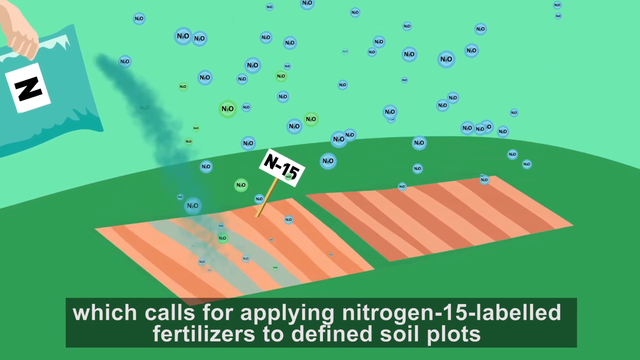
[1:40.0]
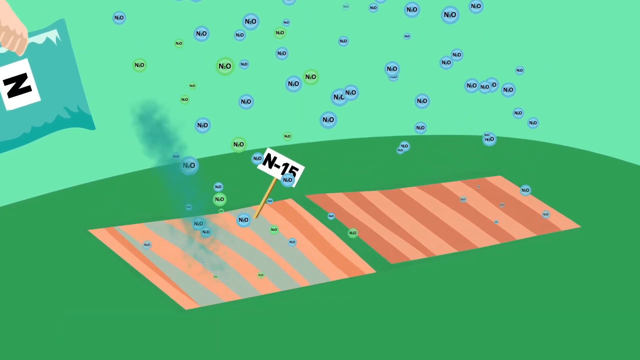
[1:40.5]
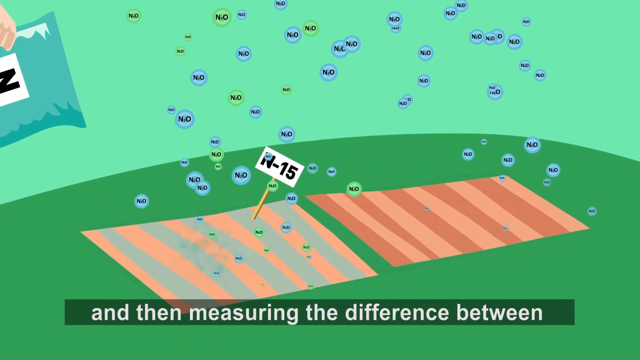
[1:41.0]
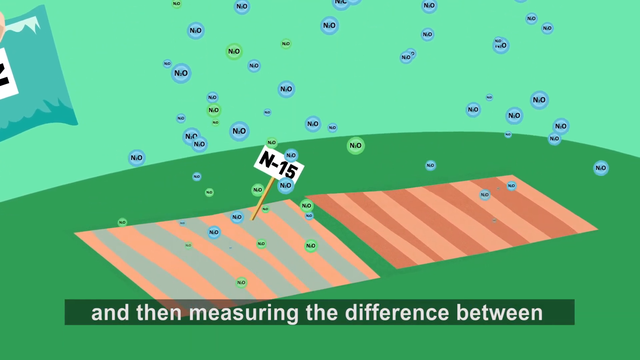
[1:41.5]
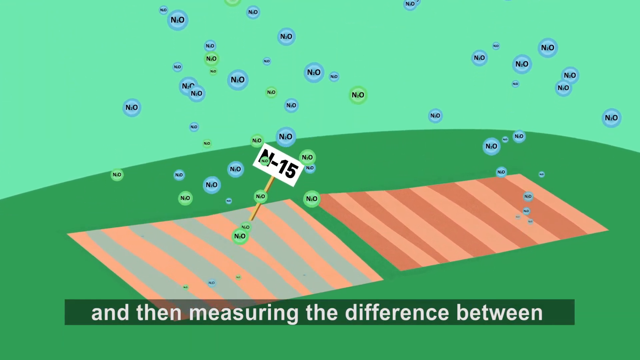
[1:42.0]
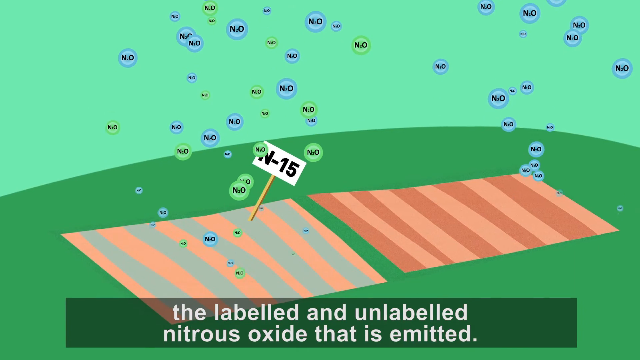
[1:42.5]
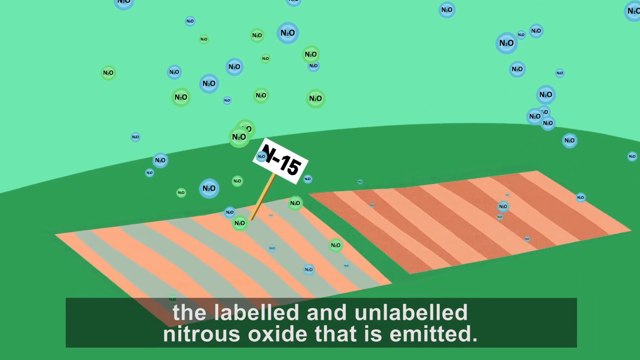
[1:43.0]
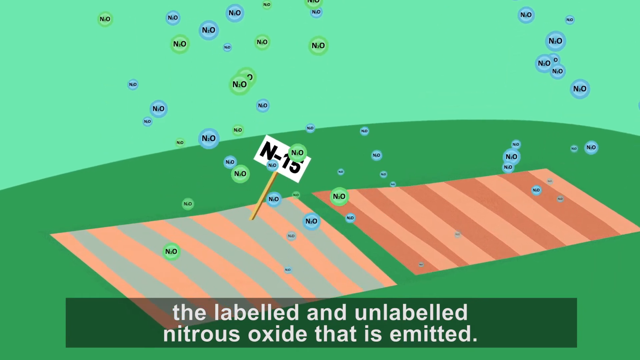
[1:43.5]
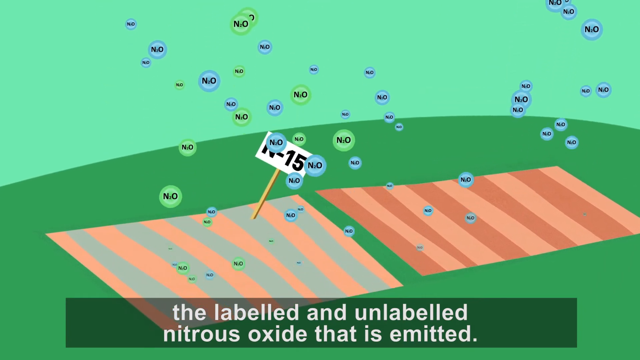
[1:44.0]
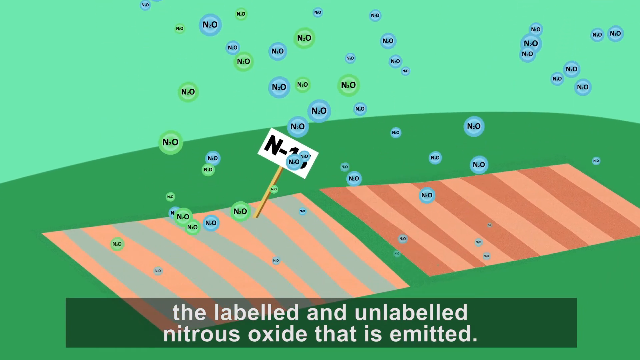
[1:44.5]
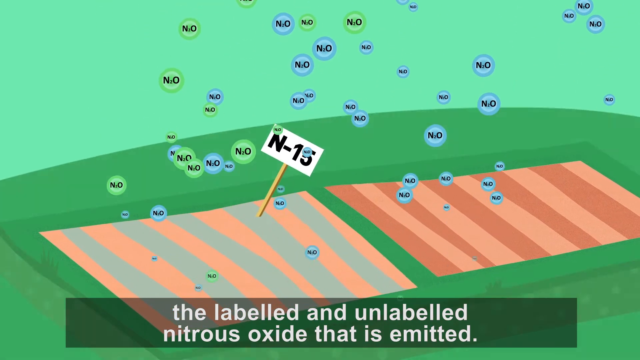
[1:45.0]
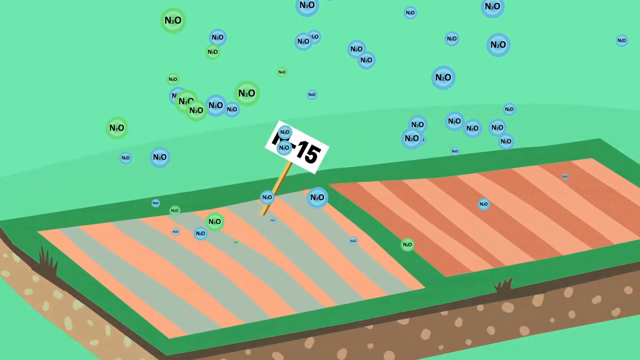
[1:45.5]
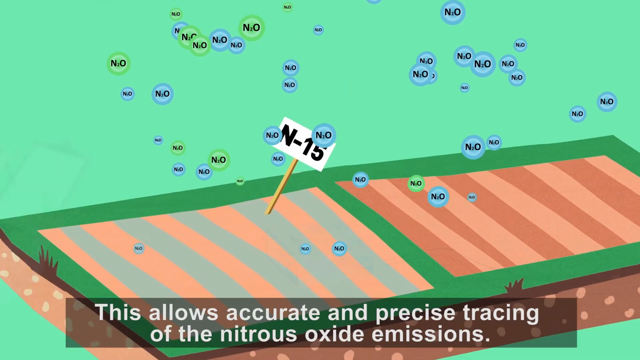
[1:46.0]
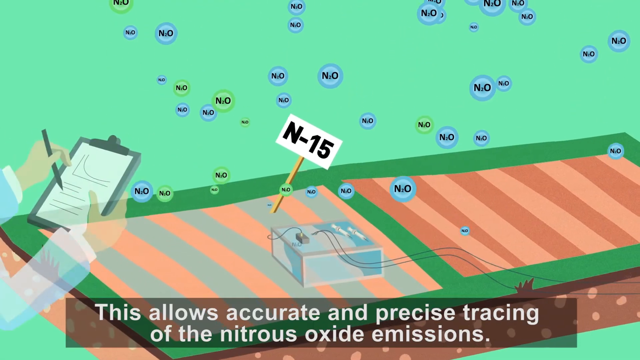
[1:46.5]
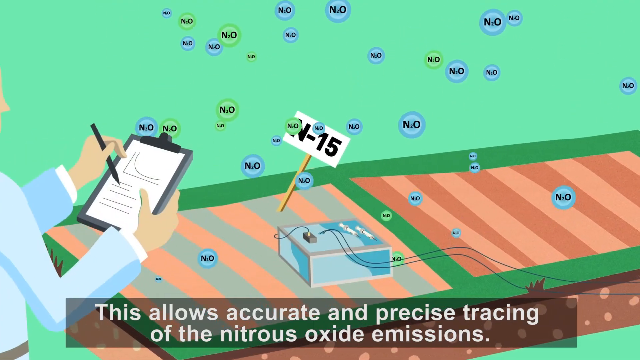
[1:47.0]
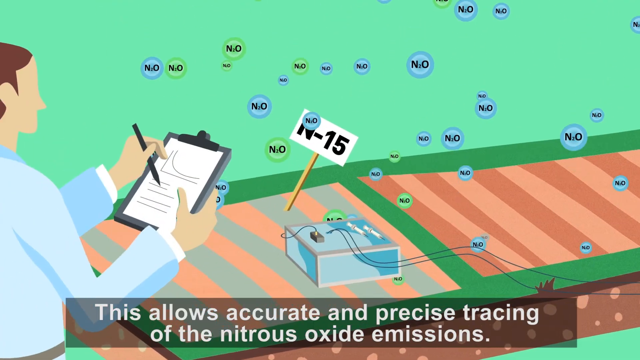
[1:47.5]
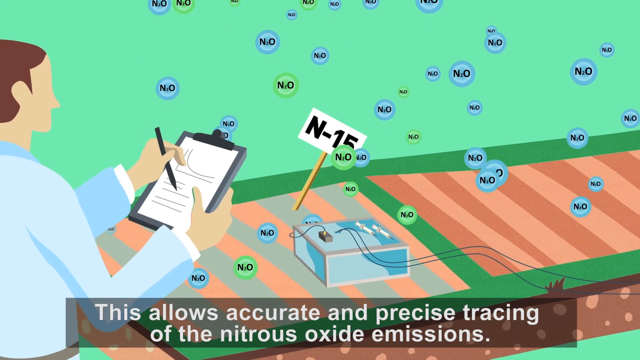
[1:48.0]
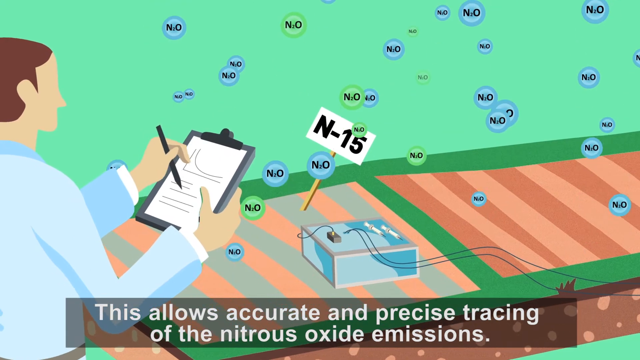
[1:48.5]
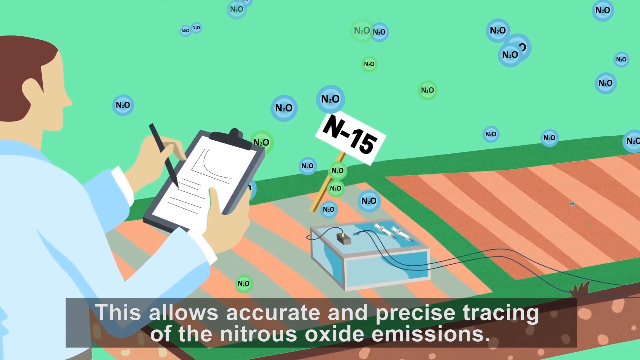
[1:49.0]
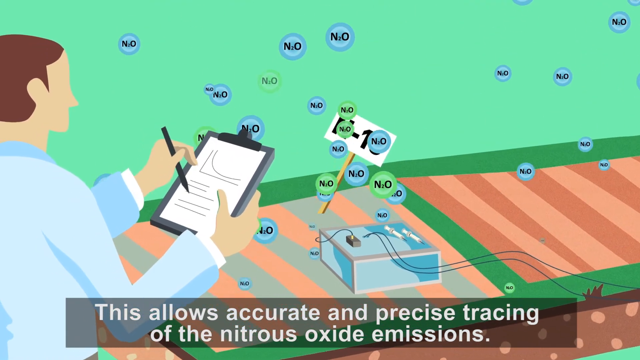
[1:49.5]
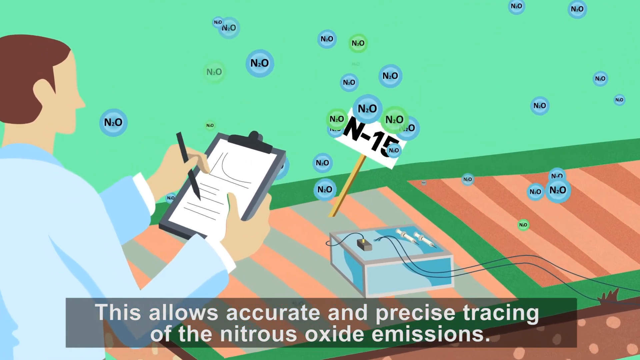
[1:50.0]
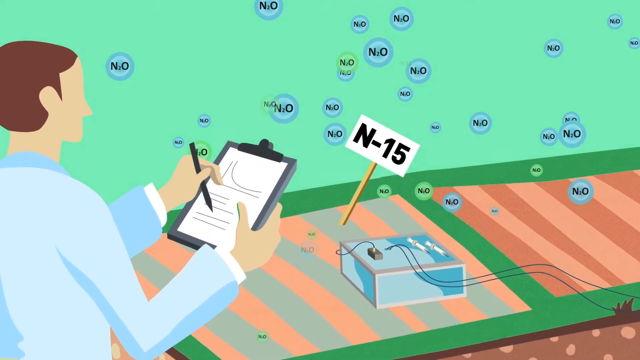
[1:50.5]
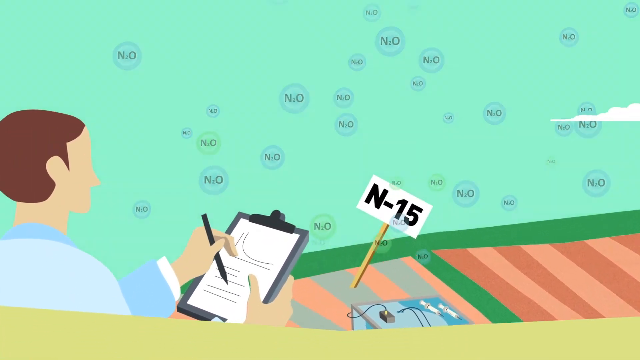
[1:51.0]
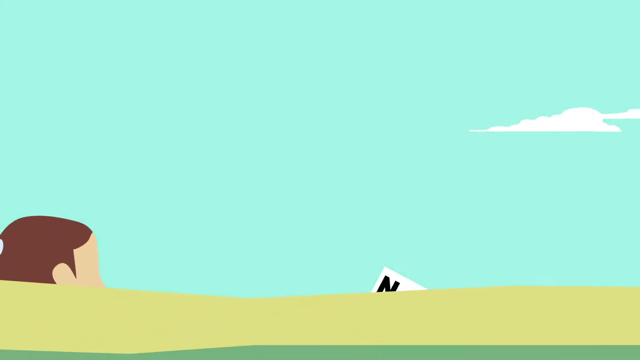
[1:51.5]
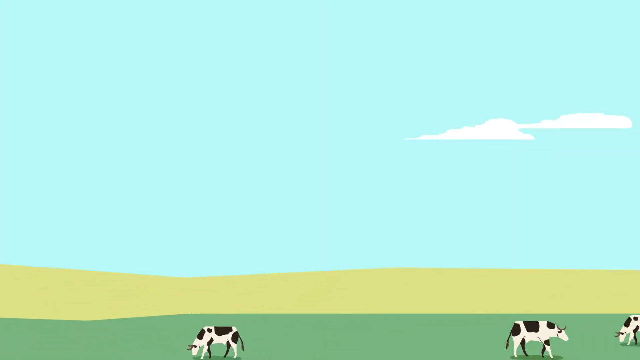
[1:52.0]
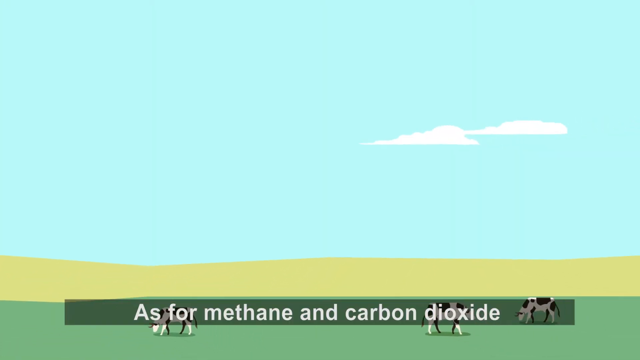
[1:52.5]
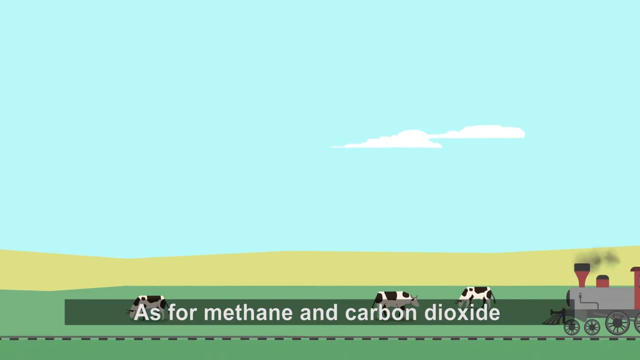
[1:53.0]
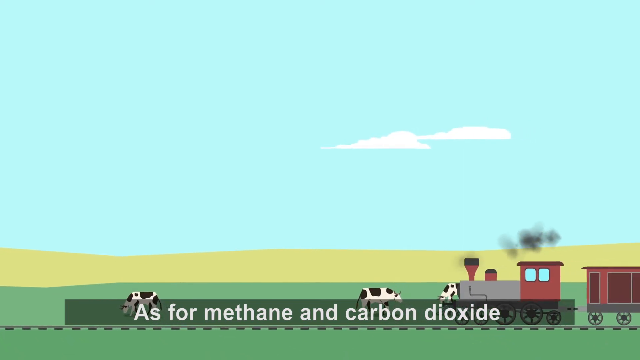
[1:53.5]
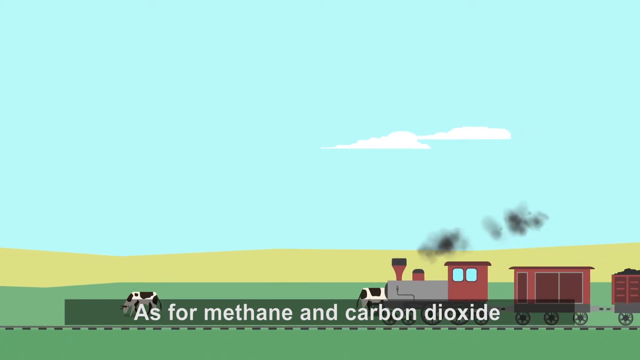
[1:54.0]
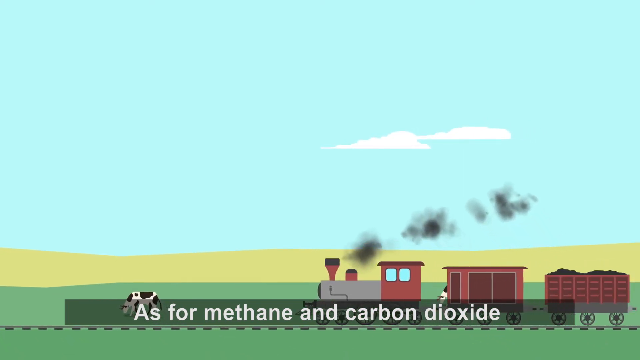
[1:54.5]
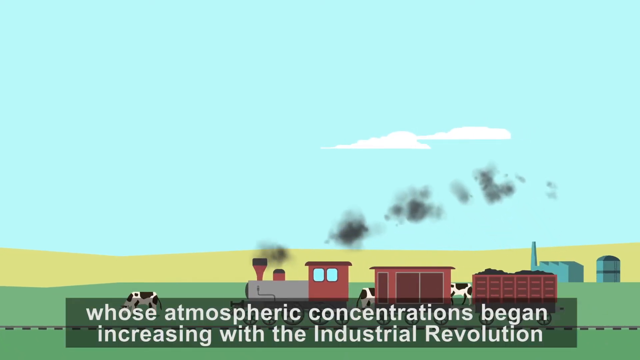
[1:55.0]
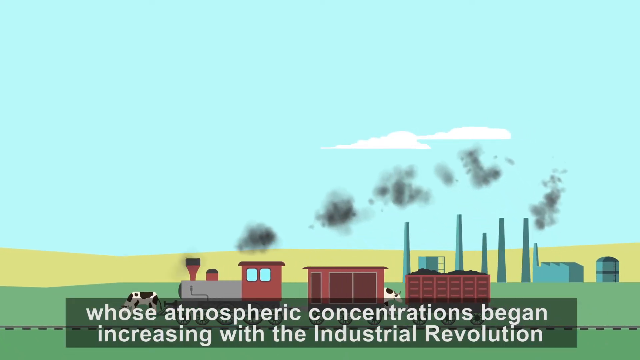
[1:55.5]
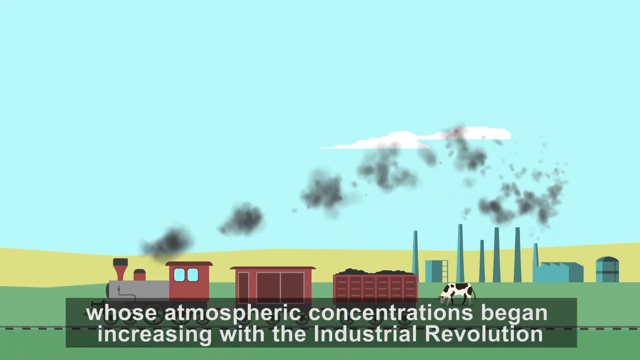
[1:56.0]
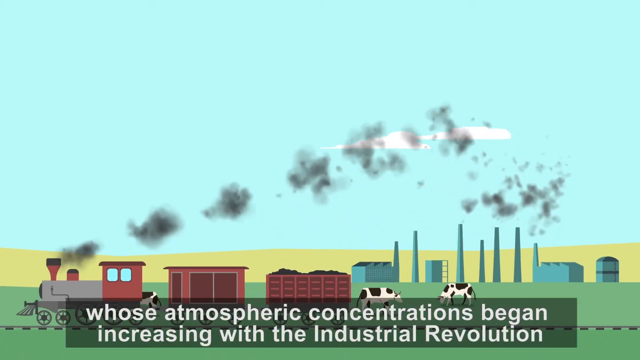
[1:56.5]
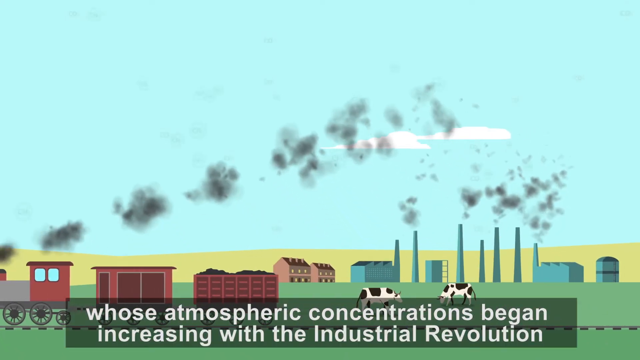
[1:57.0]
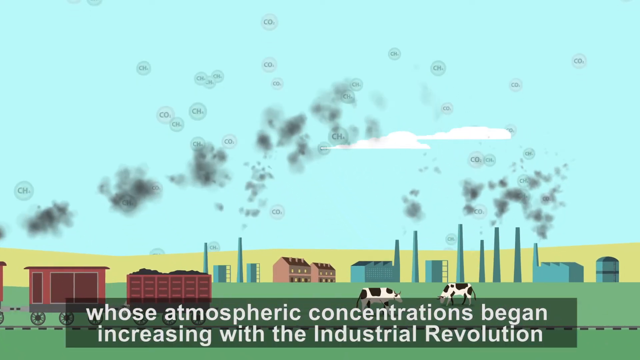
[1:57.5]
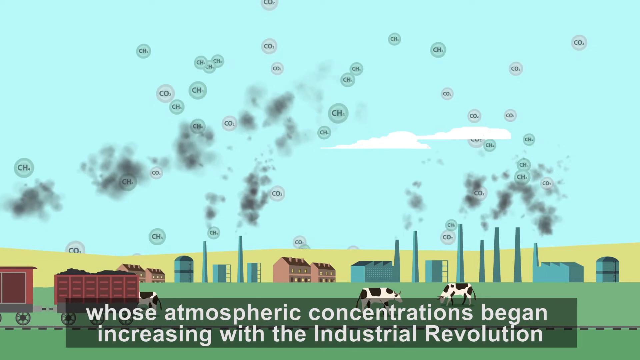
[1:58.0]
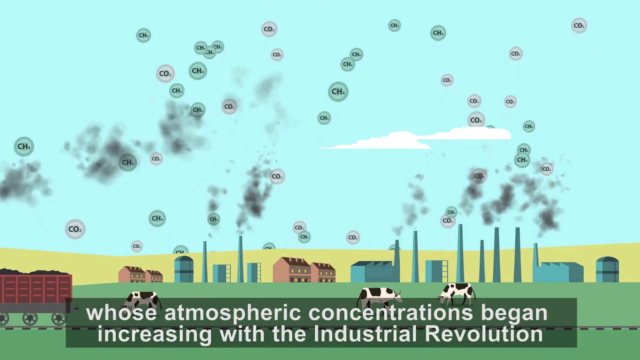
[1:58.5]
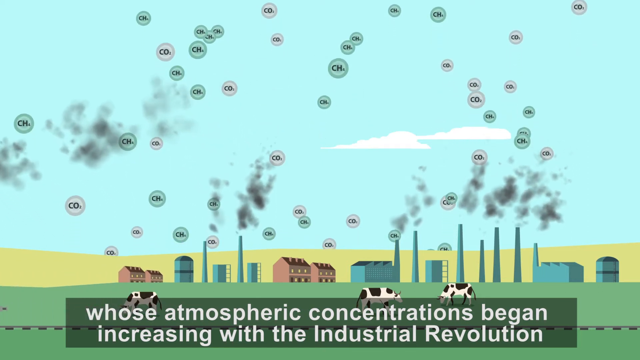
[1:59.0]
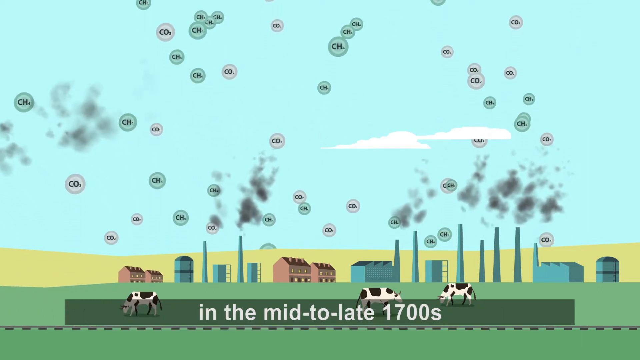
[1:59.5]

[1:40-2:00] Someone pours fertilizer on the left-hand side of the video, and "N-15" is shown. A number of NO circles rise upward. Text reads "to label and unlabel nitrogen oxide that is emitted. This allows accurate and precise tracing of nitrogen oxide emissions." It continues "As for the methane and carbon dioxide, whose atmospheric concentration began increasingly with the industrial revolution in the mid to late 1700s". When the 1700s are mentioned, a number of factories appear with smoke coming out of what seem to be chimneys, much bigger in size and with more smoke.